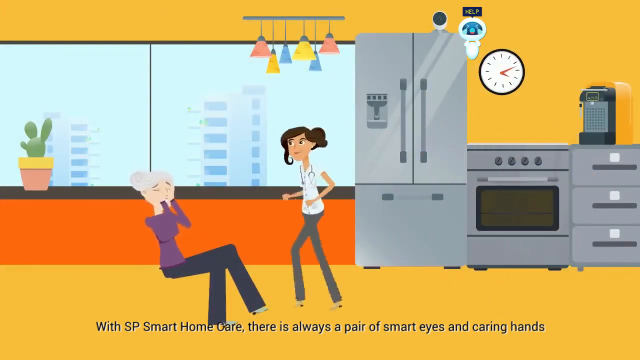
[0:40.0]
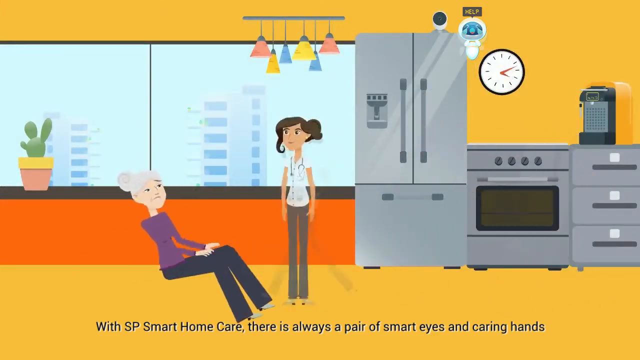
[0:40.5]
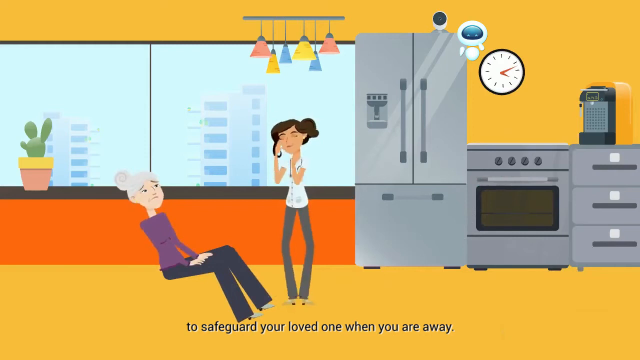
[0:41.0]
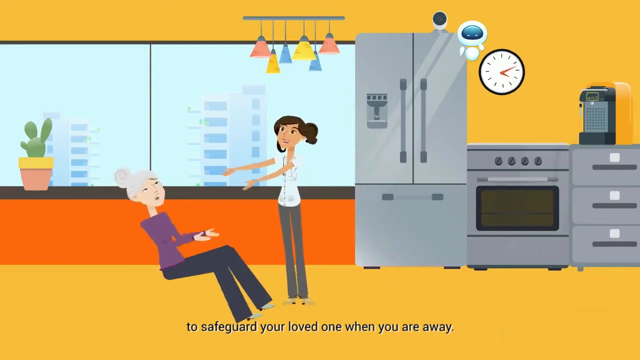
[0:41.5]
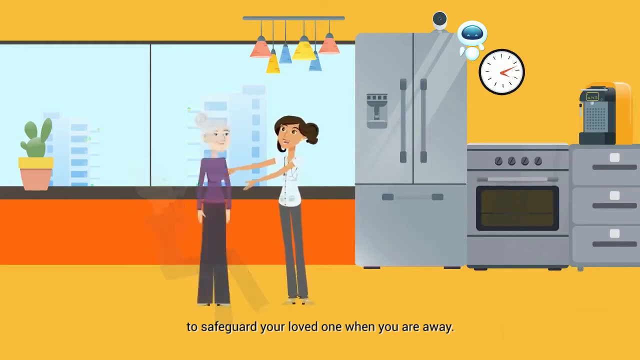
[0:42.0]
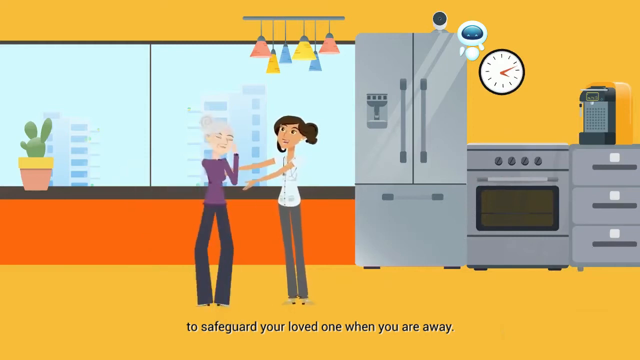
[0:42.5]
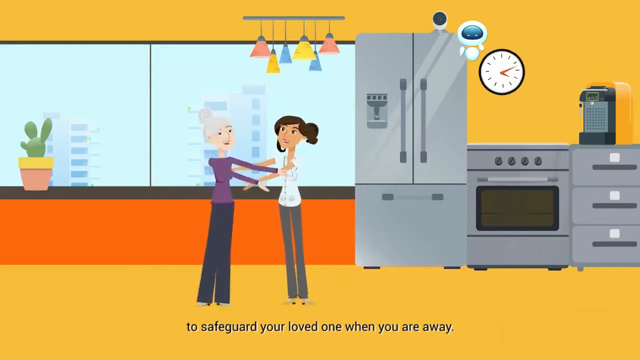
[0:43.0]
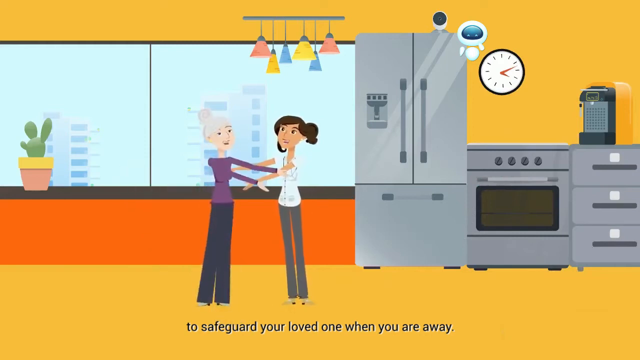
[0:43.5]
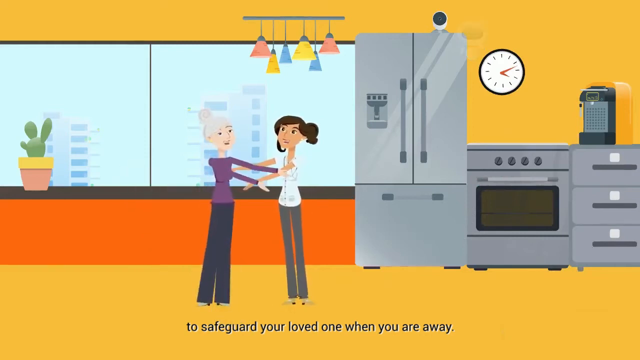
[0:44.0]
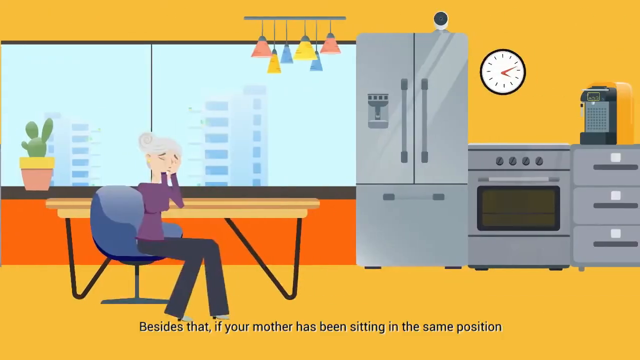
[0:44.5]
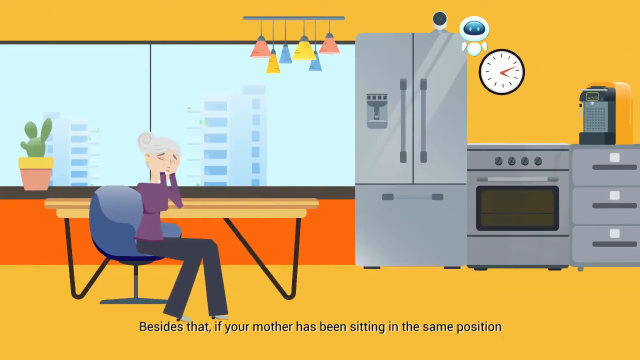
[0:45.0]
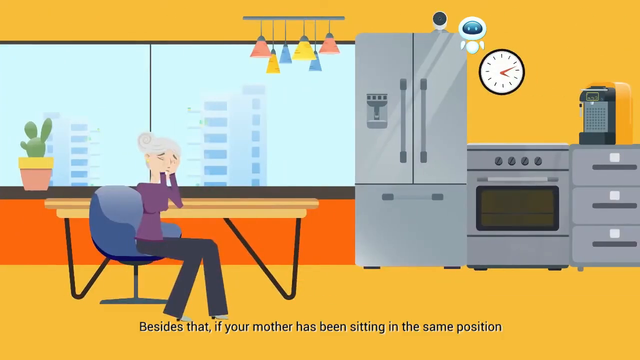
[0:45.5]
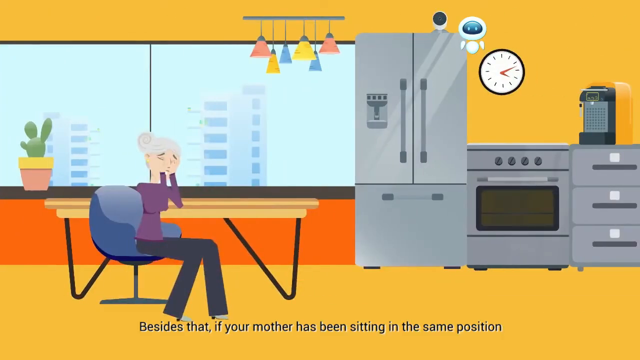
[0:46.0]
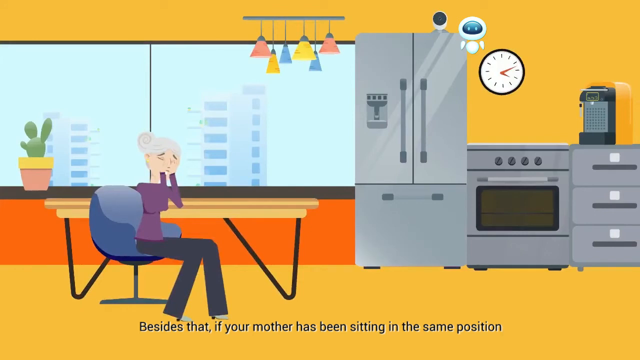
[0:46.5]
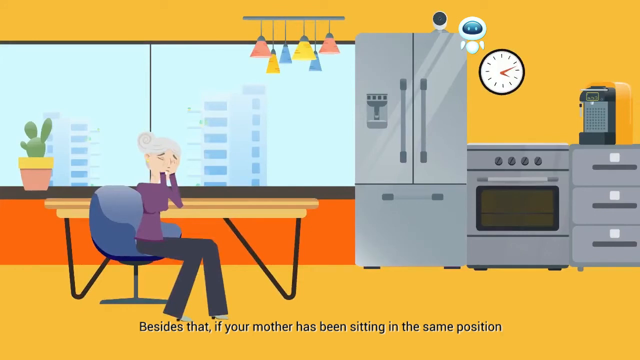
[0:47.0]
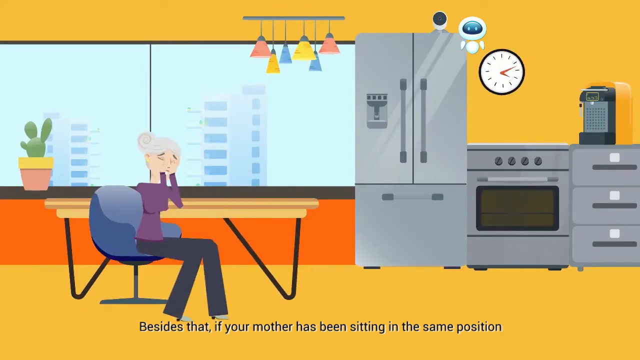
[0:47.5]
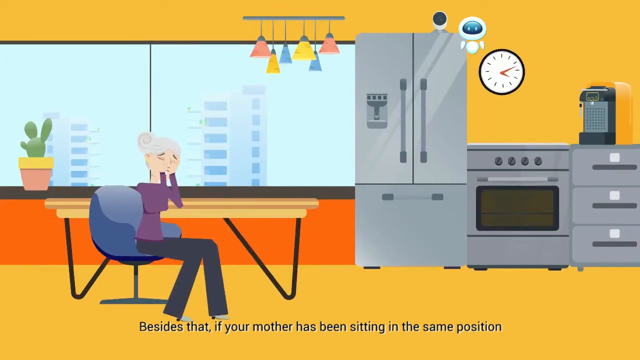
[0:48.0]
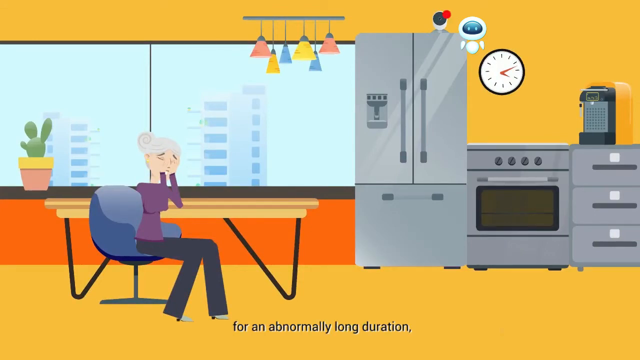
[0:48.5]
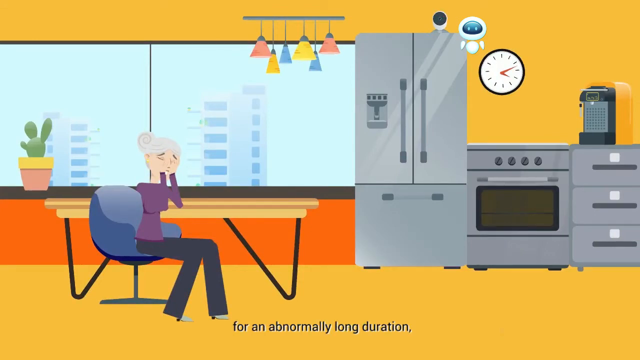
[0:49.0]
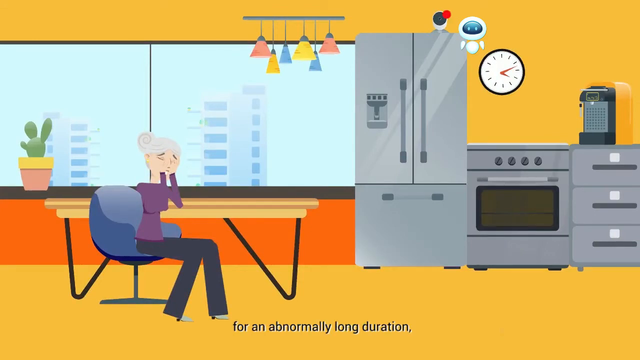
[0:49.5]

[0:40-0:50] In cartoon style, a nurse comes in to help an old woman on the ground, with the text "SP smart home care, there's always a pair of nice and caring hands" at the bottom. The text changes to "to safeguard your loved one when you are away" as the older woman stands back up with the help of the nurse. It cuts to the older woman sitting at a table with her hands over her head, with text at the bottom reading "if your mother has been sitting in the same position for an abnormally long duration".